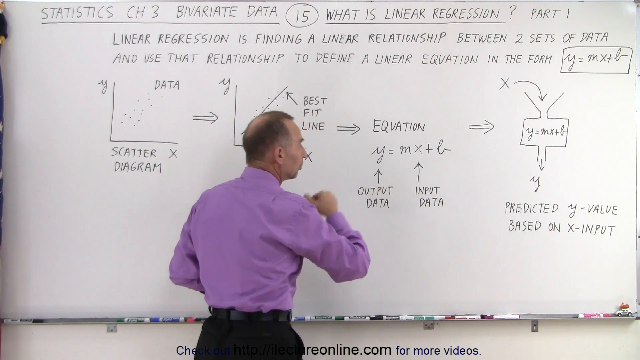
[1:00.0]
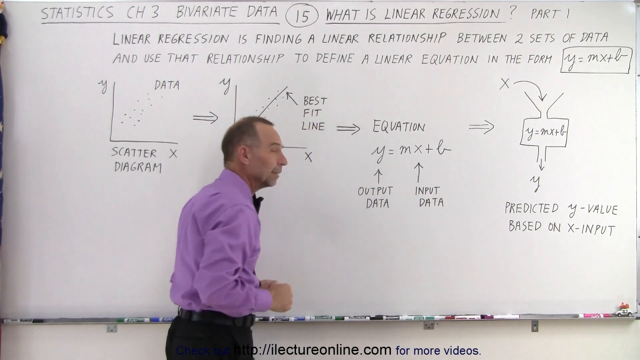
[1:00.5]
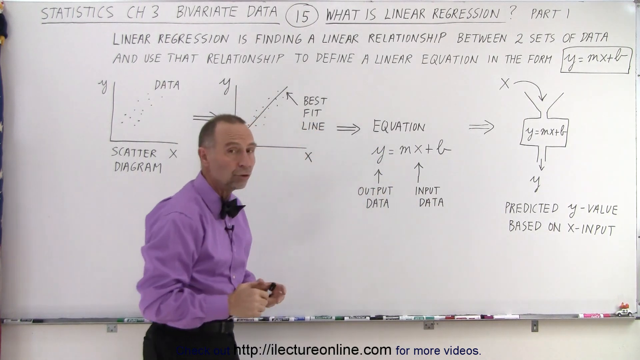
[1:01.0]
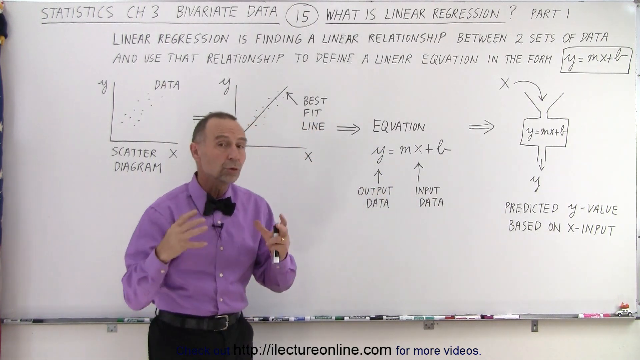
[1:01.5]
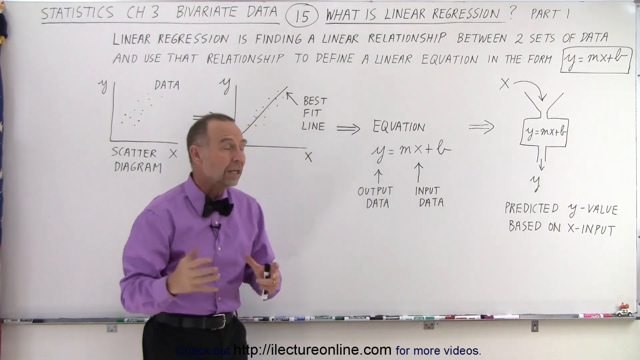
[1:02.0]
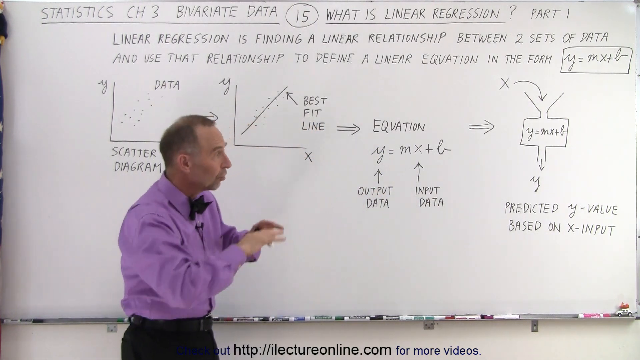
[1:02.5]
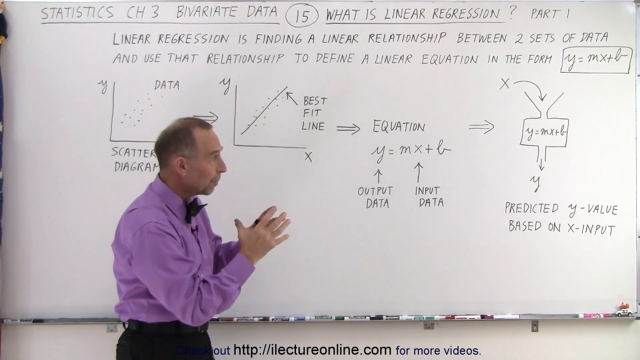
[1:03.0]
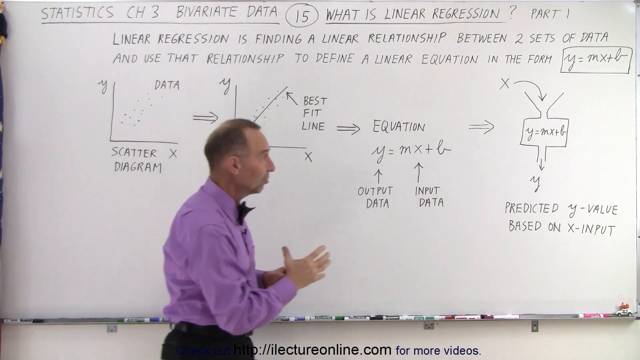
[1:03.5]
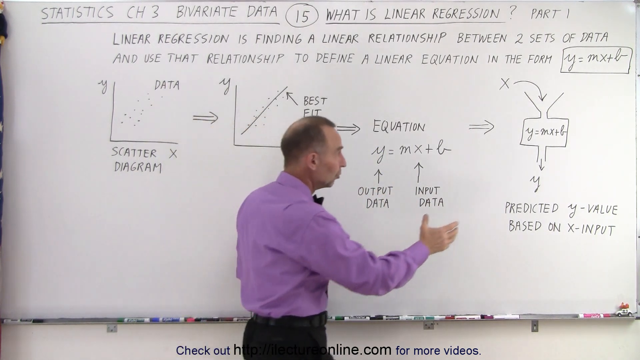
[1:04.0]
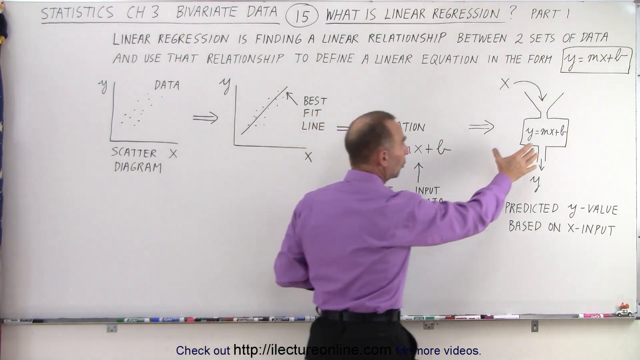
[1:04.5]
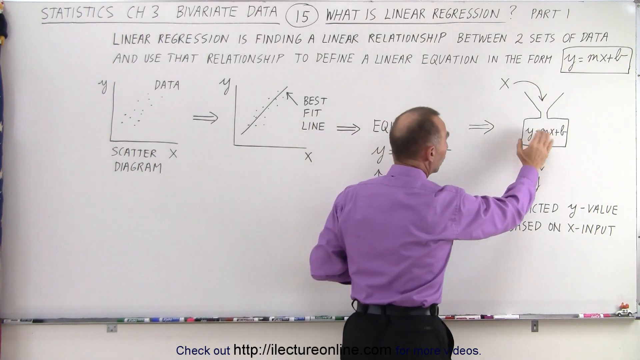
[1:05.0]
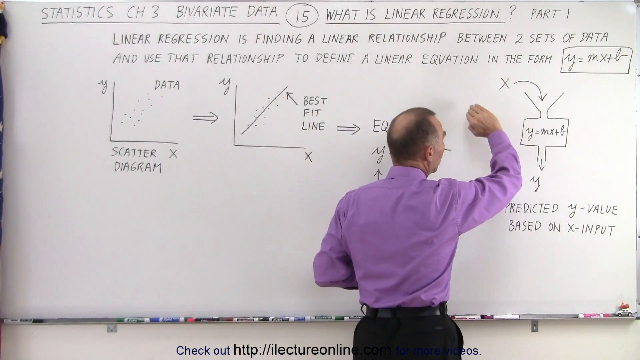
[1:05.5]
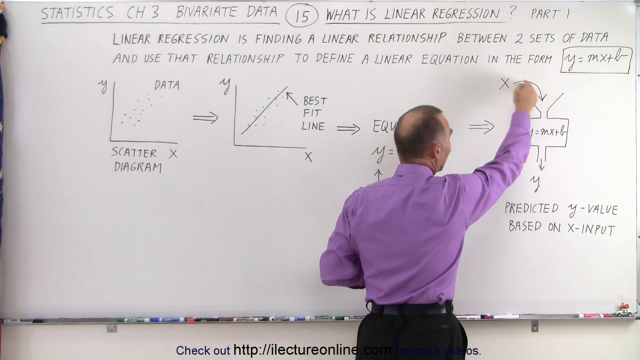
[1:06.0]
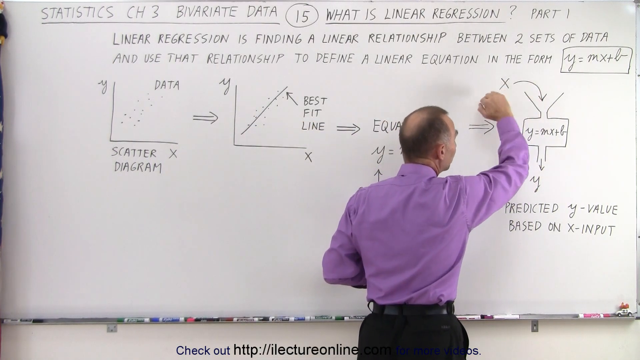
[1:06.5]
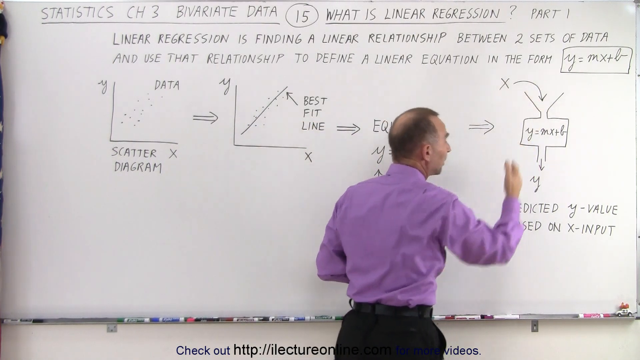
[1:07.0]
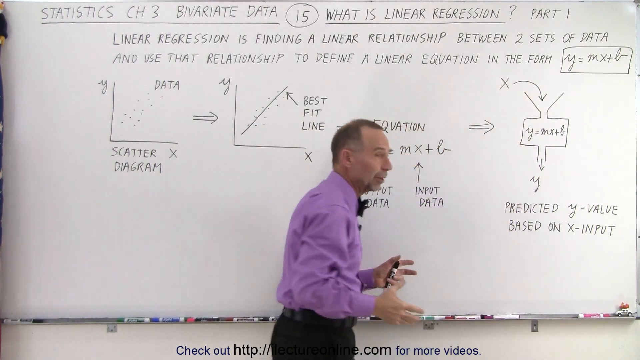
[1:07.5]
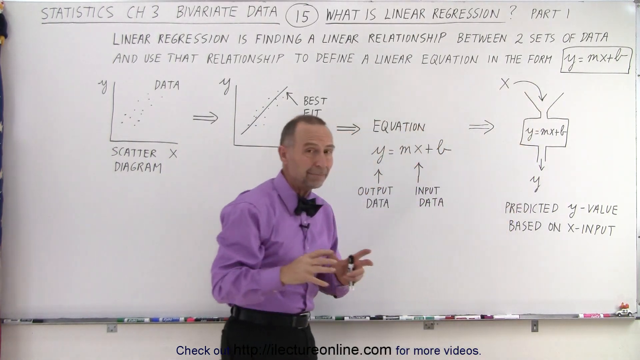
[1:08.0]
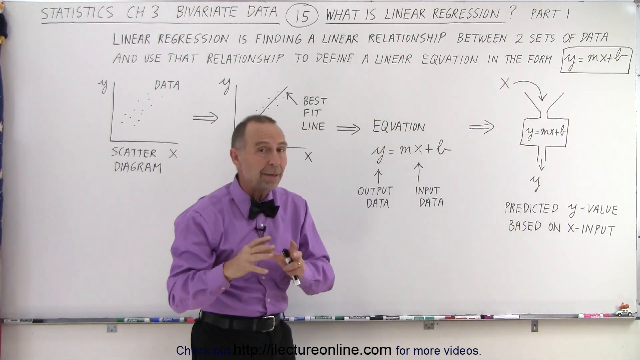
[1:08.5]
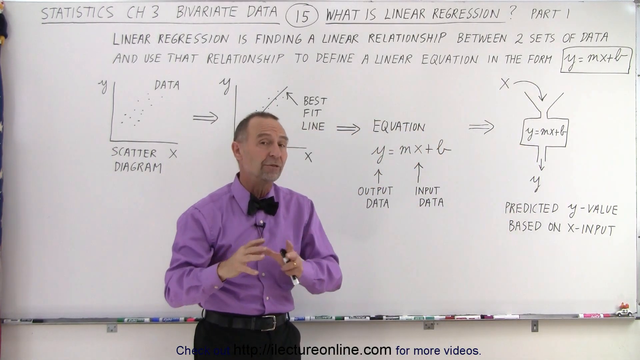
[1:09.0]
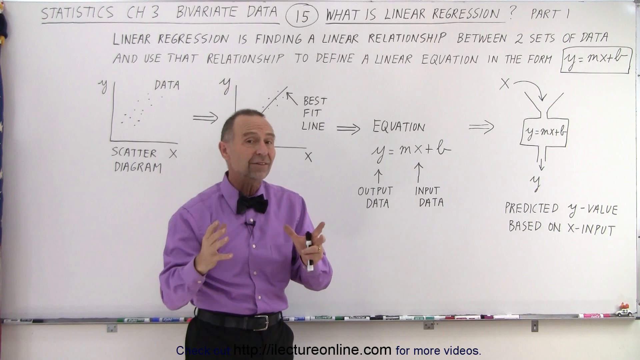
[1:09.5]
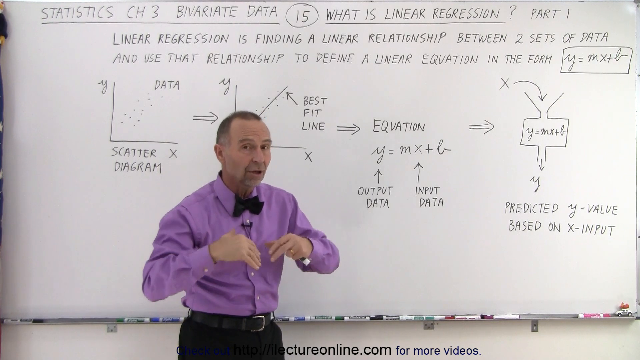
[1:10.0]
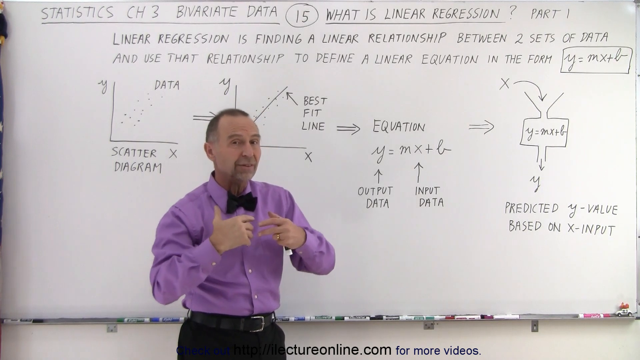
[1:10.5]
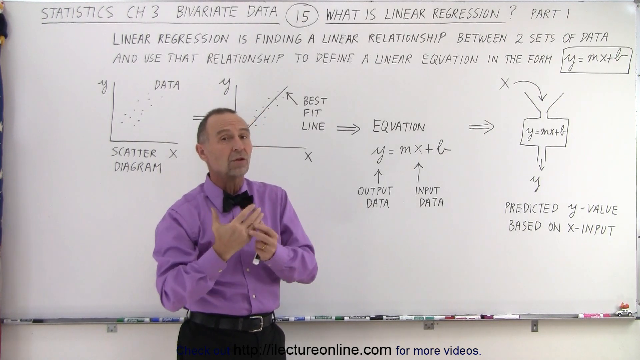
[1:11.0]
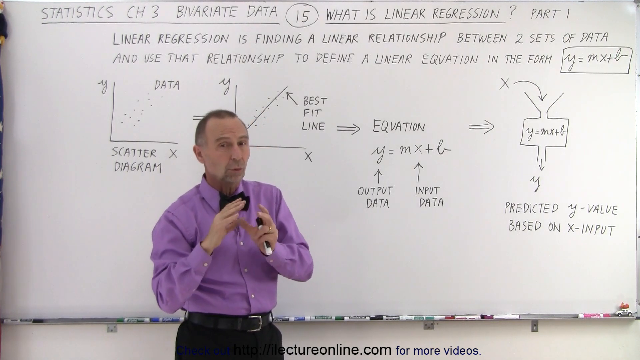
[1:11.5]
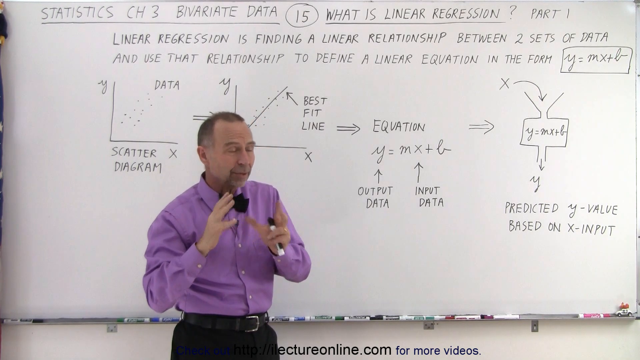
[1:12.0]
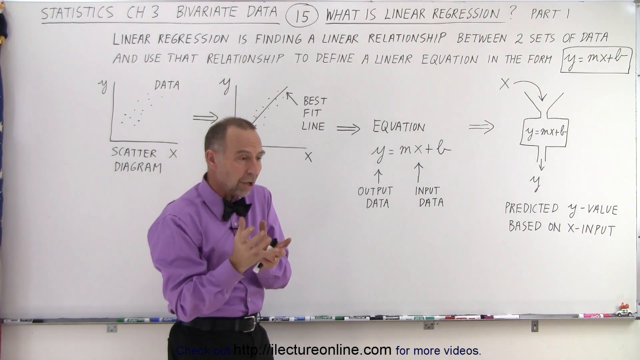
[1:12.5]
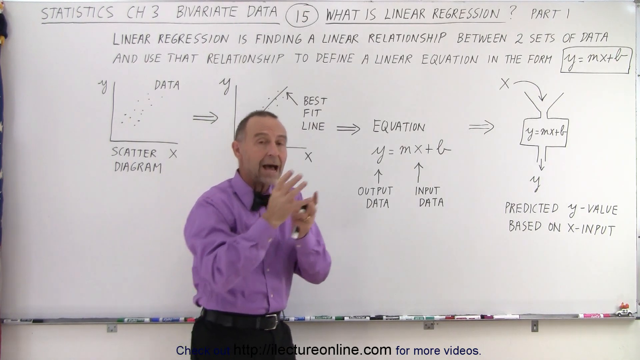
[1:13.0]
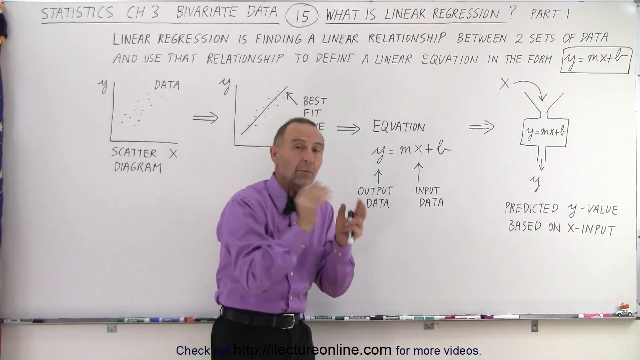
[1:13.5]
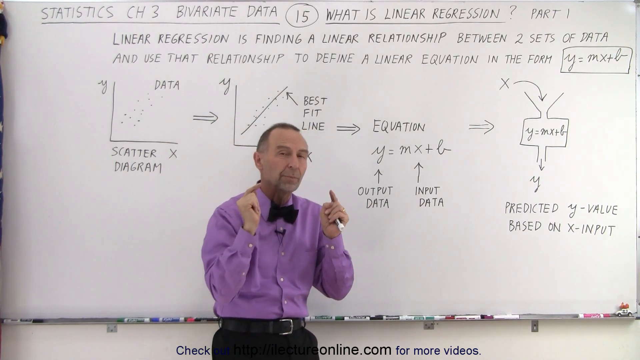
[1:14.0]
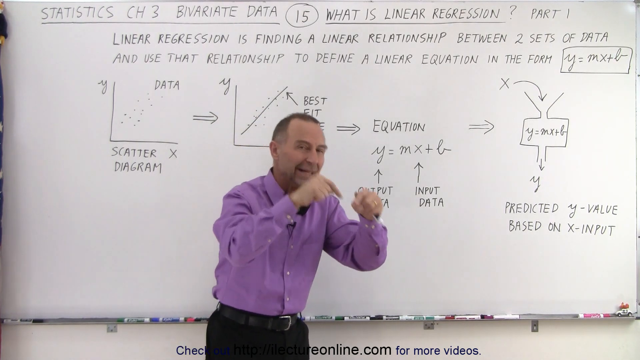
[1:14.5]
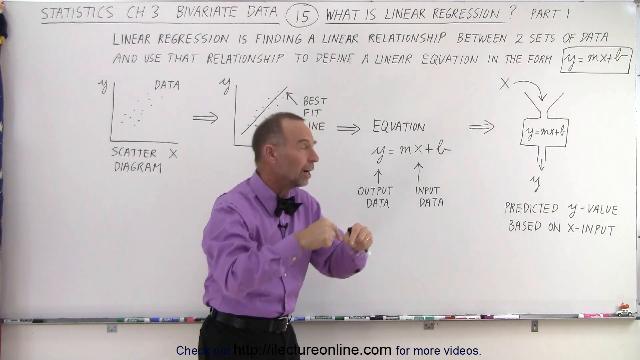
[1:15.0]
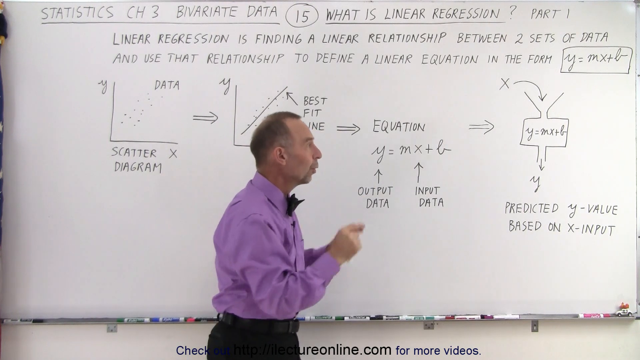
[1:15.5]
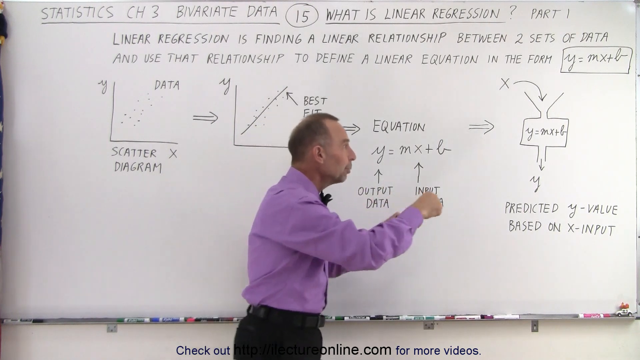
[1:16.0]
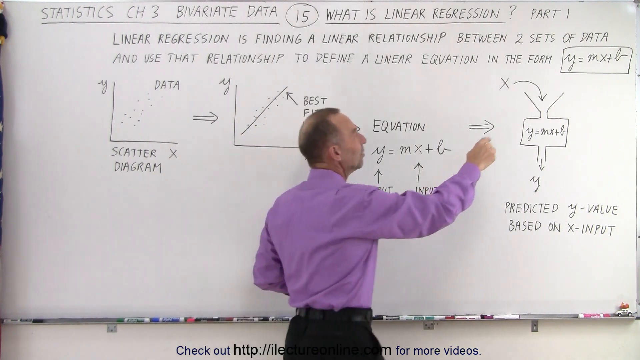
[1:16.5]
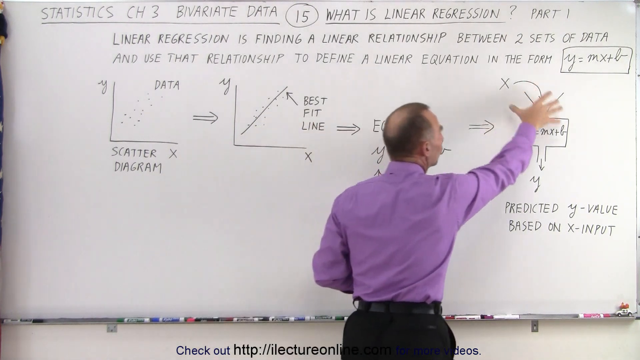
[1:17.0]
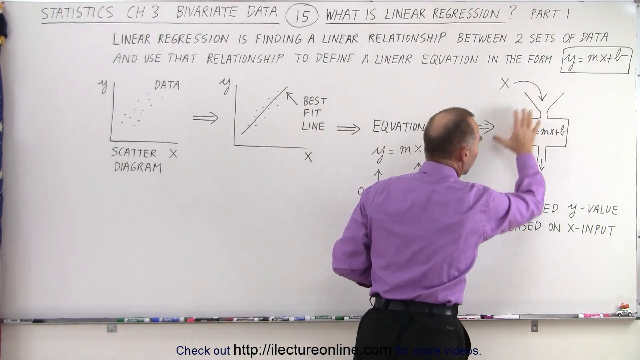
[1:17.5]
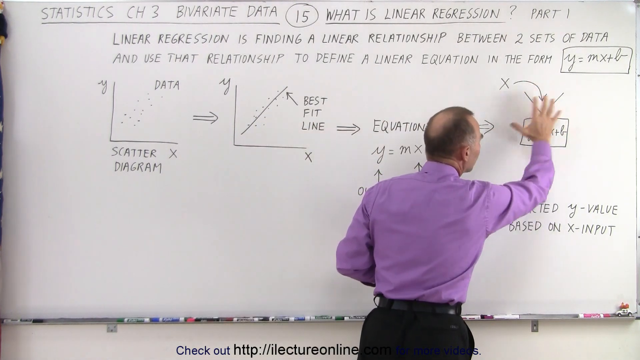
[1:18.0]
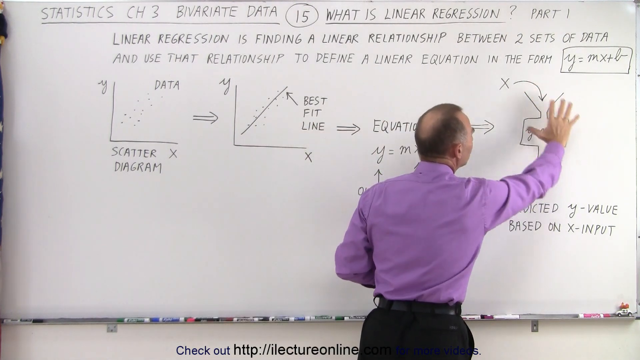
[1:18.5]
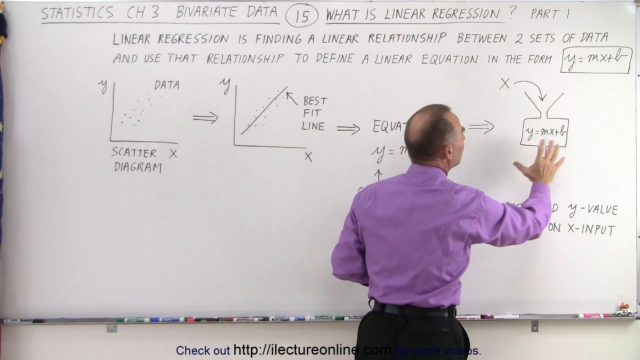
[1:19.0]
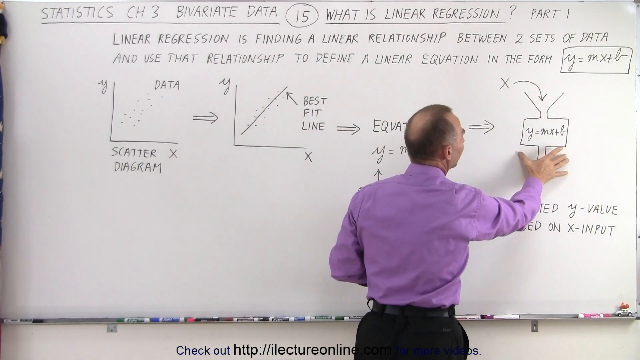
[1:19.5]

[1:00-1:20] The setting remains the same, but the view is slightly zoomed out compared to before, so the lecturer is not as close up. He moves on to showing the last step of the formula he has written. No objects have been added, and nothing on the board has been added or removed; he still does not write, but points by hand as he moves through the steps. In the bottom right, a toy car is placed along with the markers on the whiteboard.